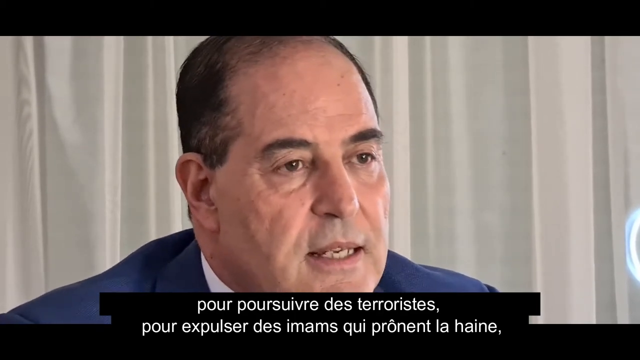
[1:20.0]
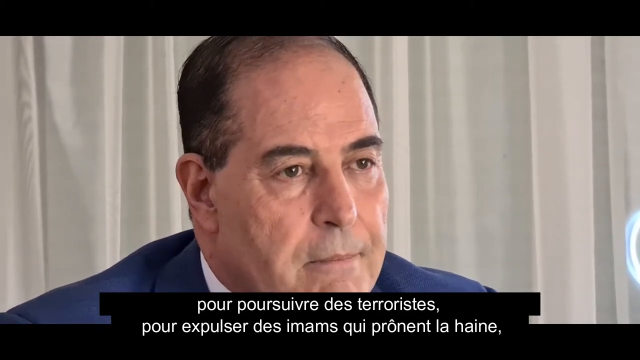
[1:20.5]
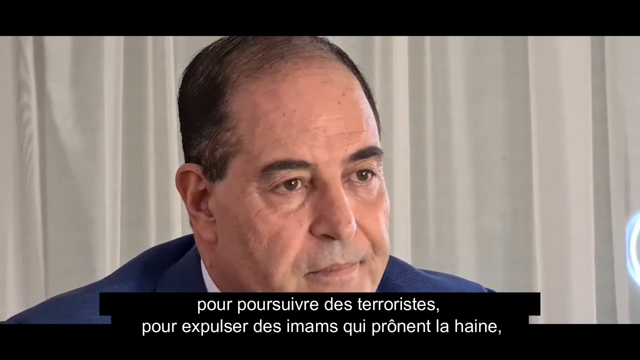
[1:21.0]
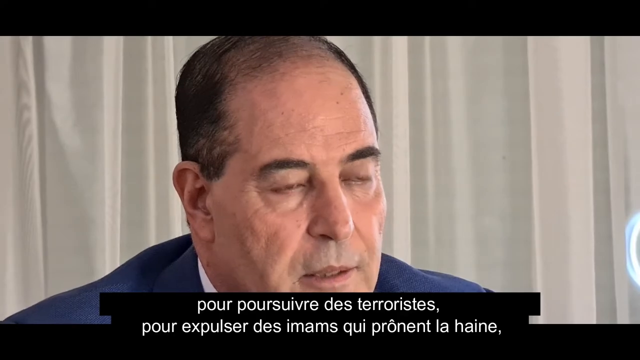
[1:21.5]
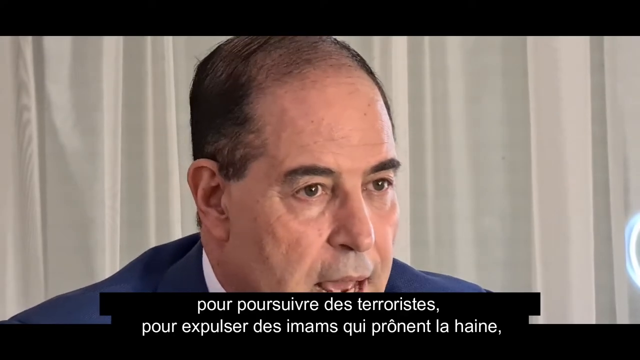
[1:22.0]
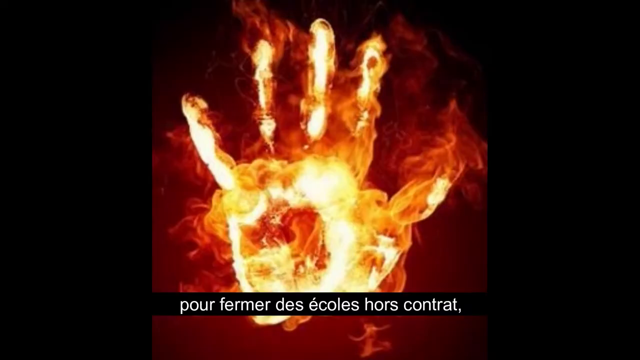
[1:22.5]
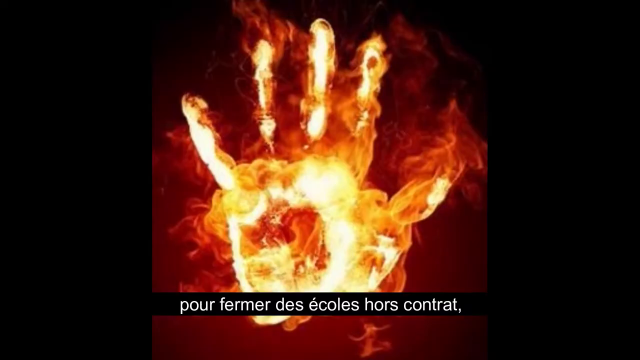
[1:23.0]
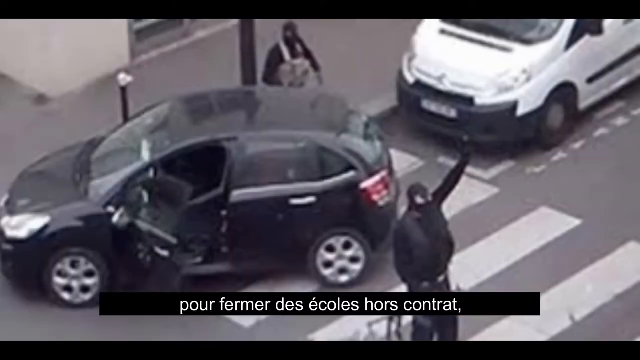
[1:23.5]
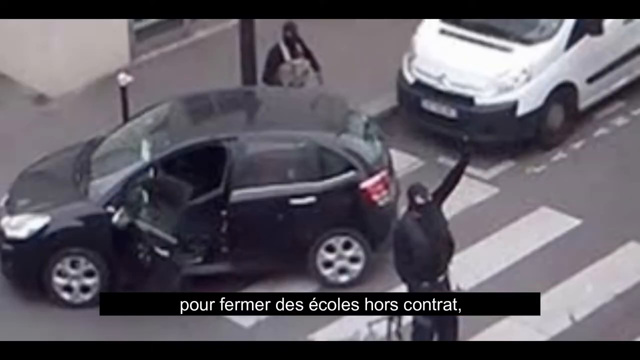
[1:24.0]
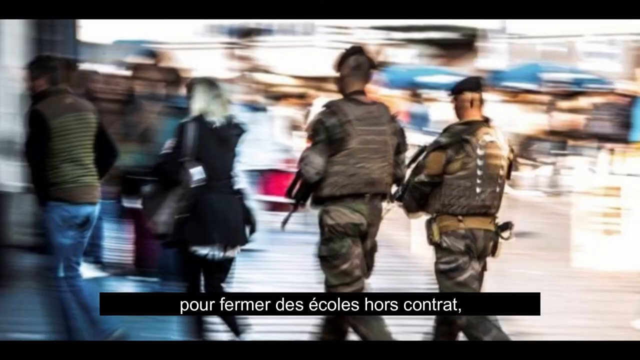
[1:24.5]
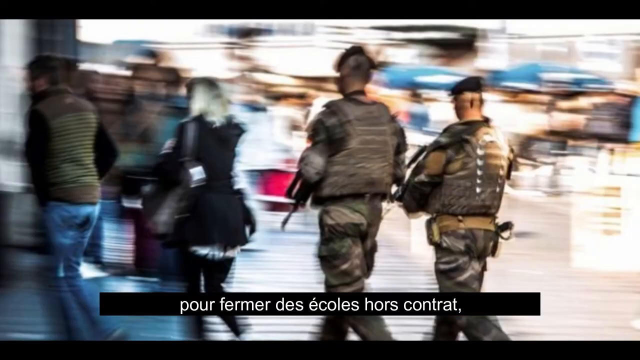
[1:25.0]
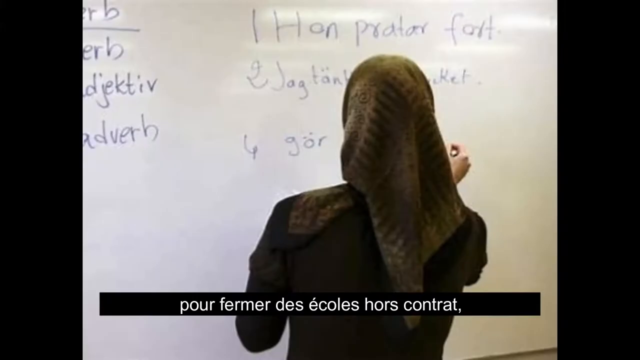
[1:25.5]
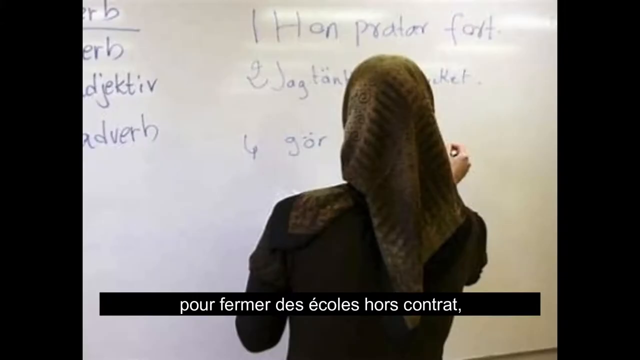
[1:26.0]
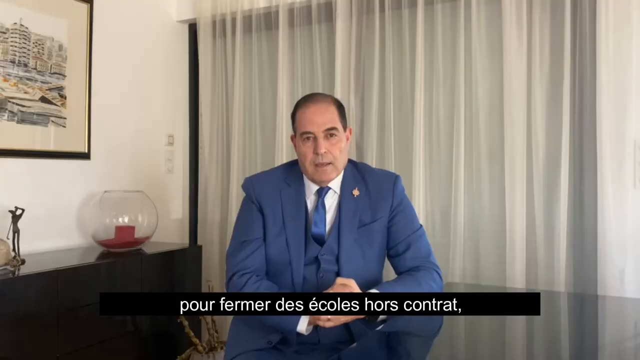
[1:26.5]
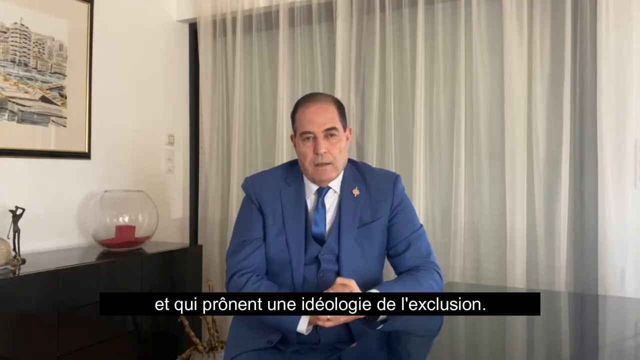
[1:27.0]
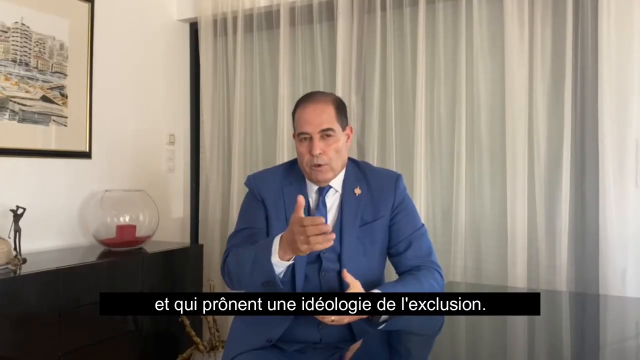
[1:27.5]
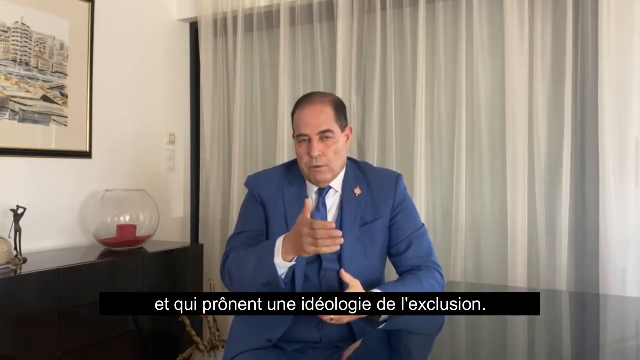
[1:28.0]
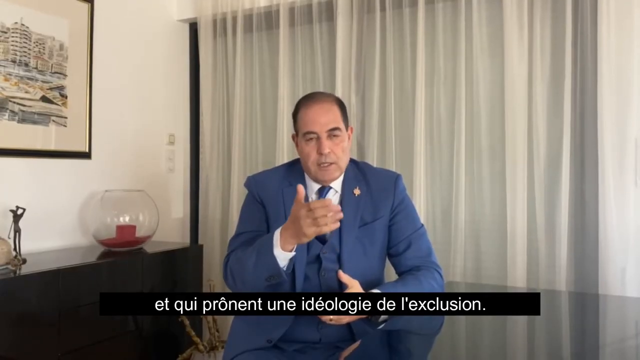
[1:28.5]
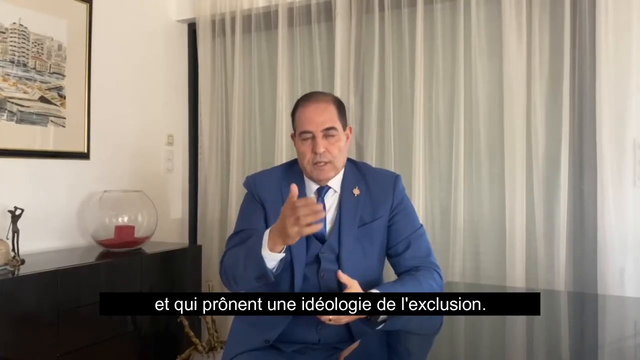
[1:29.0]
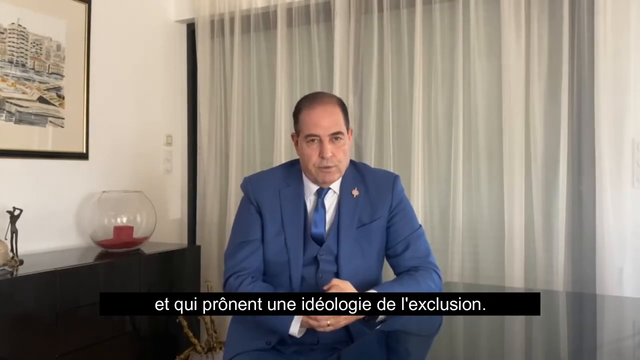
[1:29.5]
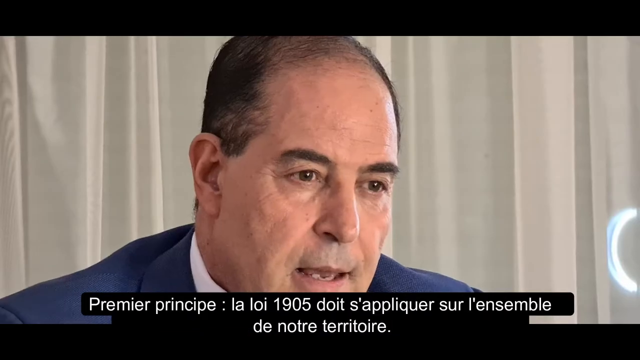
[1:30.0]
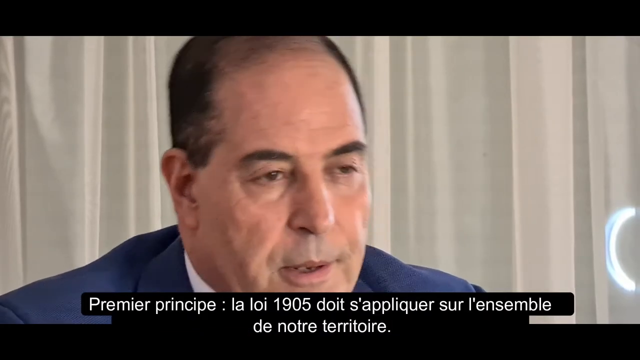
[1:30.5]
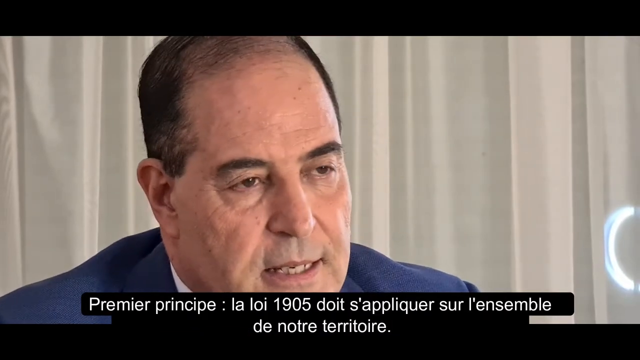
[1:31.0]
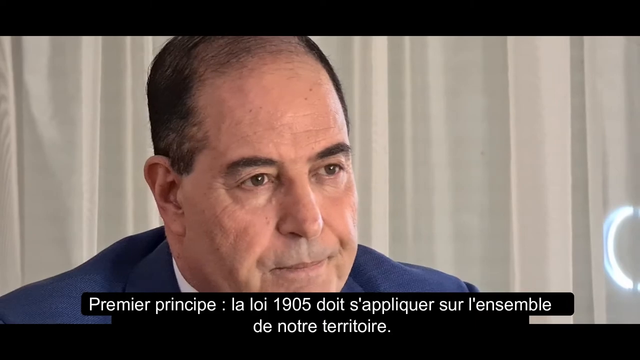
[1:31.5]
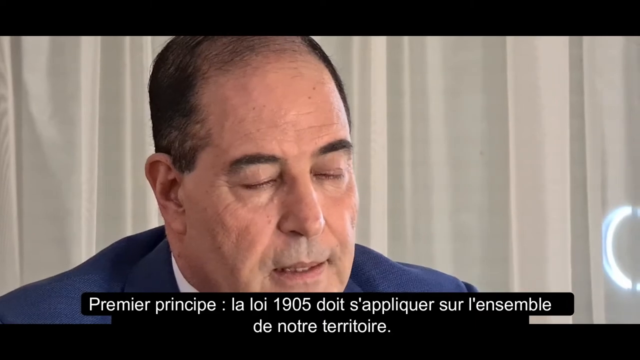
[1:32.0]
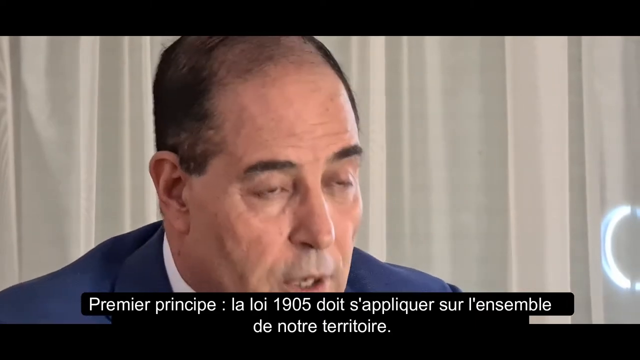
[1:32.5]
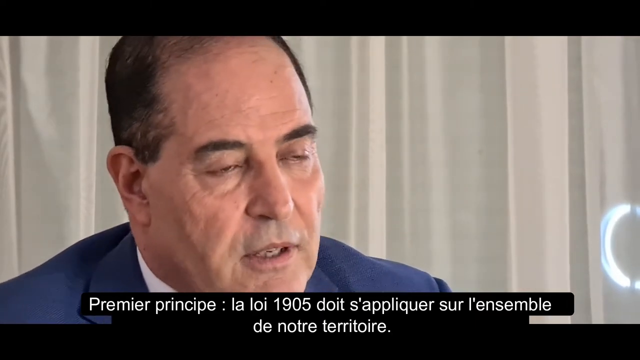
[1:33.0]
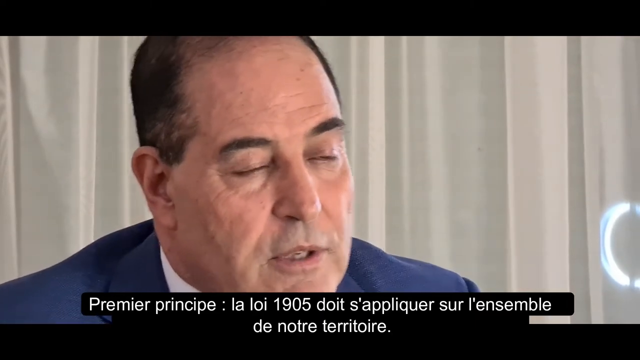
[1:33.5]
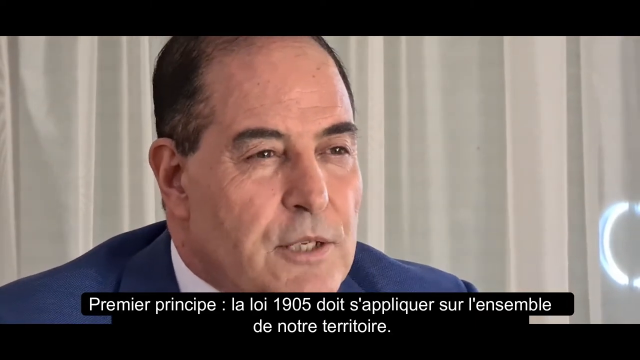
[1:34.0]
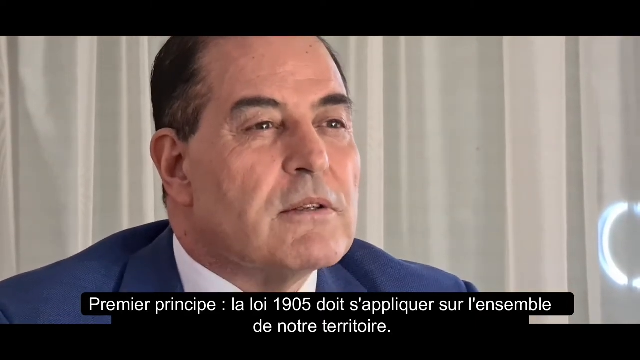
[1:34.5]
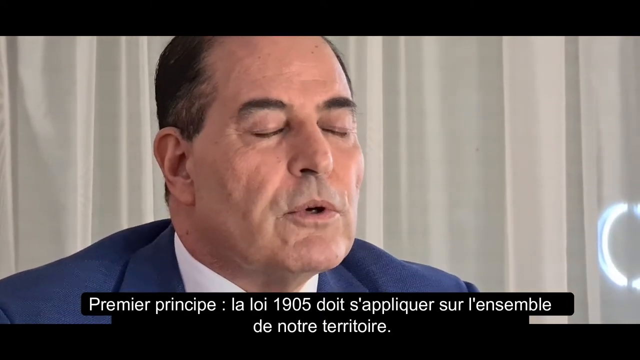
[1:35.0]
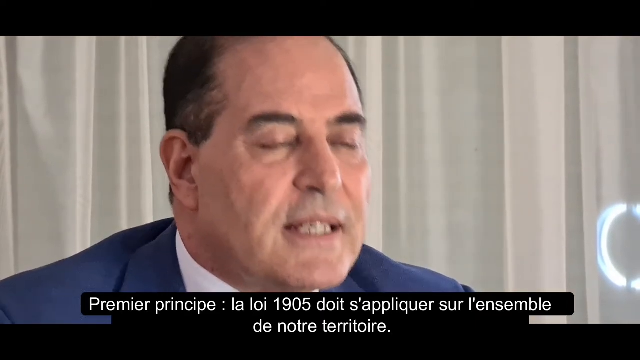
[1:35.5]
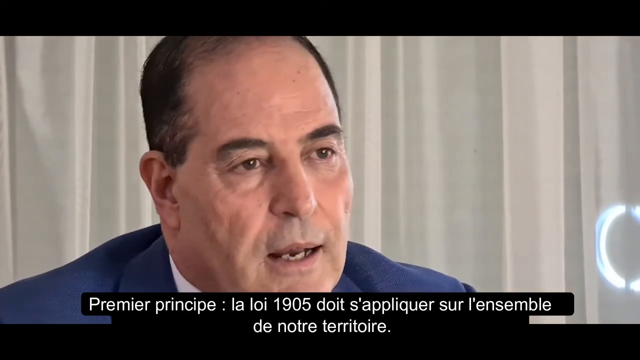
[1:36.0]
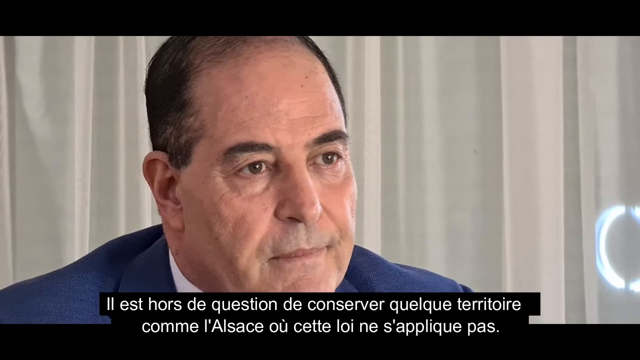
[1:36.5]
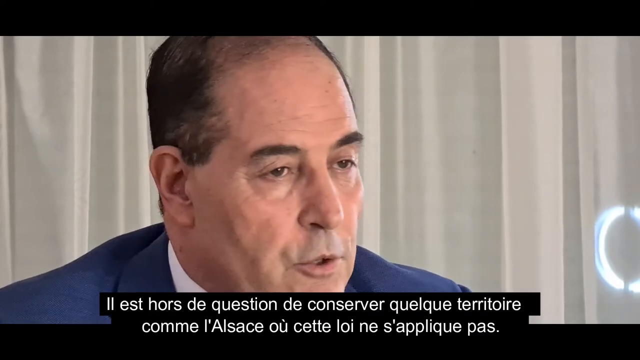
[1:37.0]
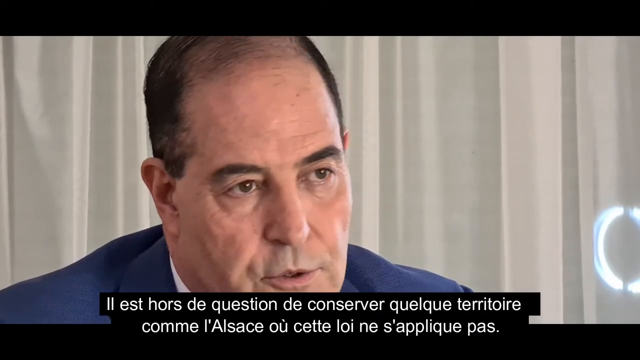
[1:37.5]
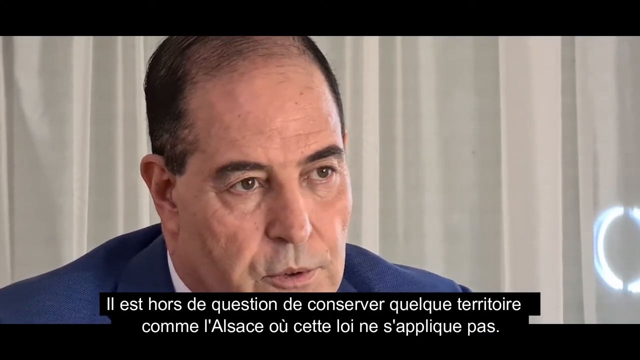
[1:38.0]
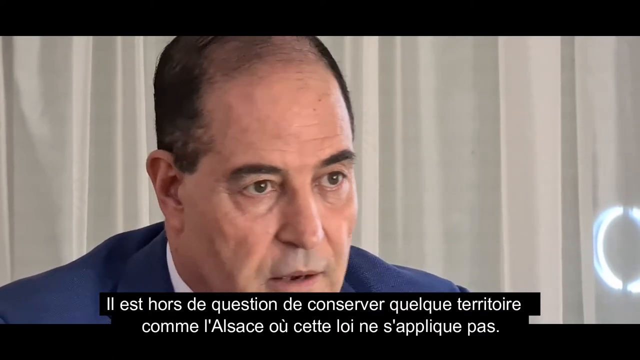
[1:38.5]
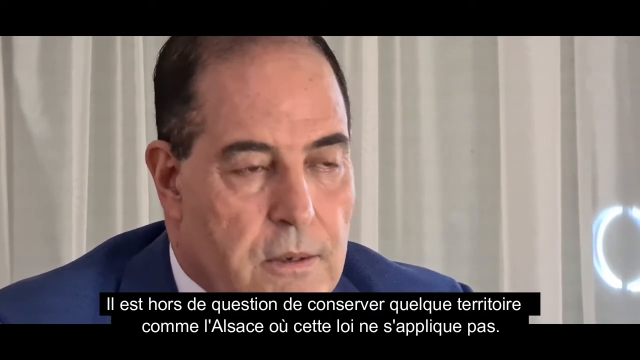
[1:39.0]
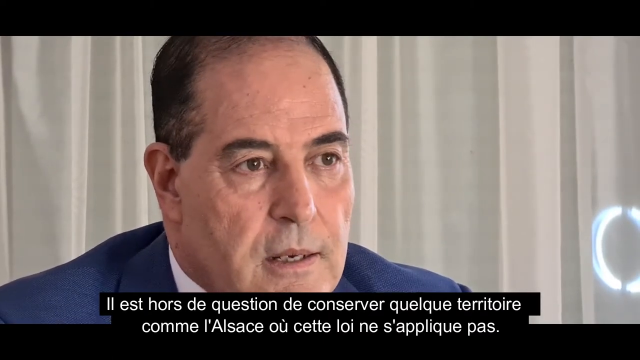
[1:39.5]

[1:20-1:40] The man keeps talking with the view still zoomed in close to his face. The scene shifts to a bright yellow fire flame shaped like a hand. Next is an outdoor street scene at what looks like a crosswalk area, with a small black car and two people dressed all in black wearing what look like ski masks; they look like robbers, as if doing some sort of bank robbery, and one has their arms up in the air. The scene then shifts to a woman writing on a whiteboard with her back to the camera; the whiteboard in front of her has words on it, and she appears to be a teacher. The scene shifts back to the man in the blue suit sitting and talking with a serious look, and the camera zooms in close to his face once again, with captions in a foreign language at the bottom.